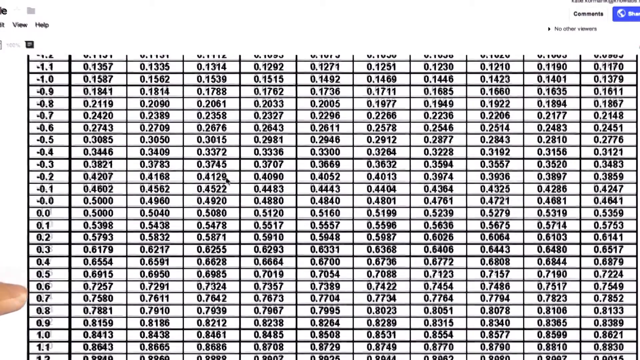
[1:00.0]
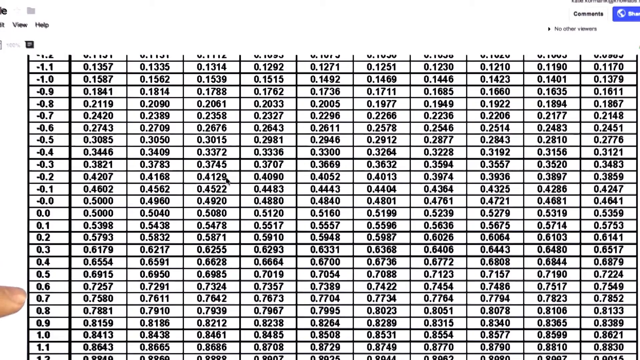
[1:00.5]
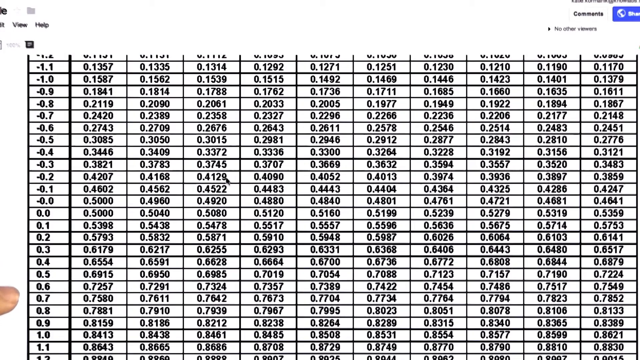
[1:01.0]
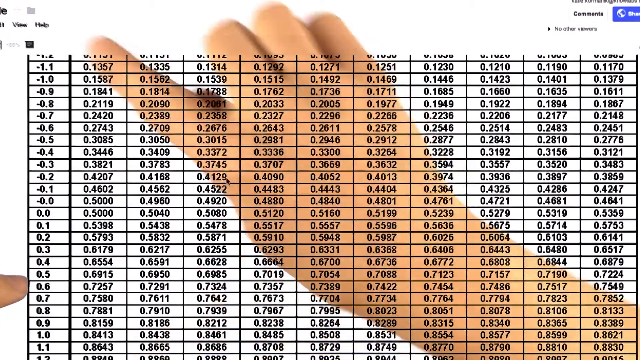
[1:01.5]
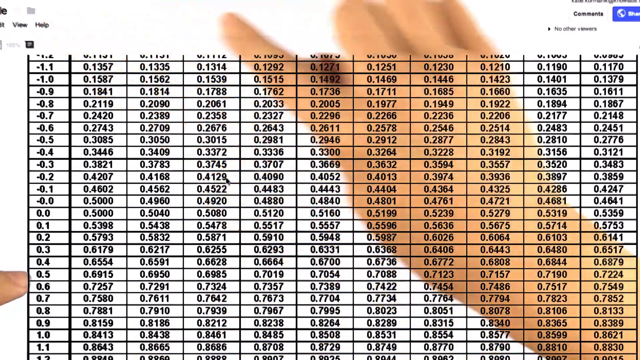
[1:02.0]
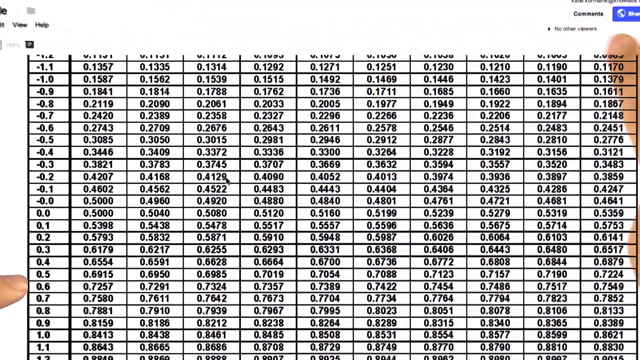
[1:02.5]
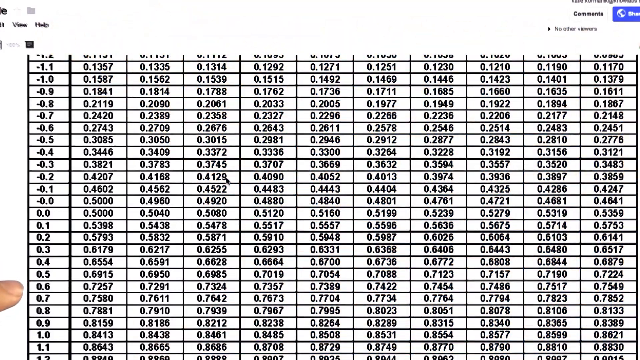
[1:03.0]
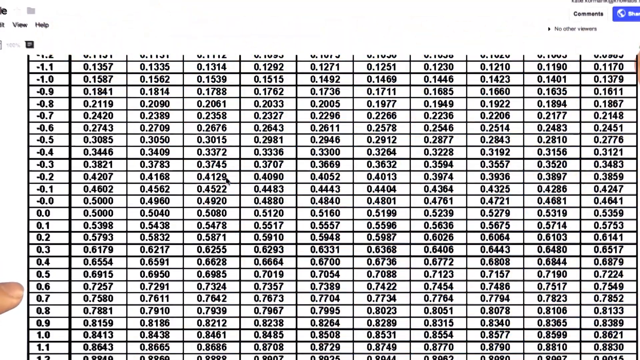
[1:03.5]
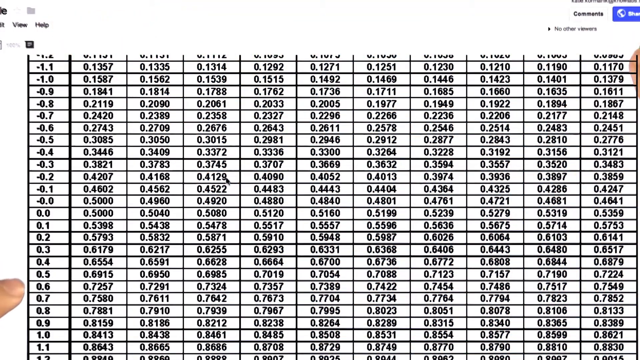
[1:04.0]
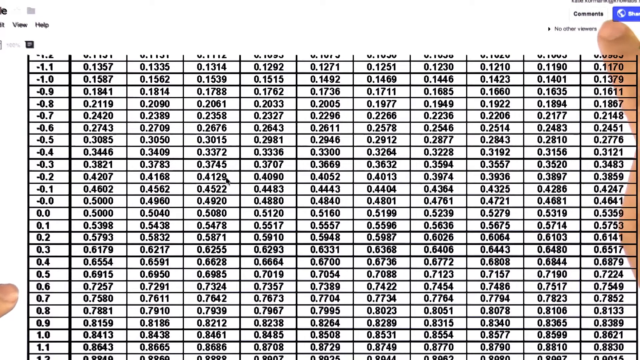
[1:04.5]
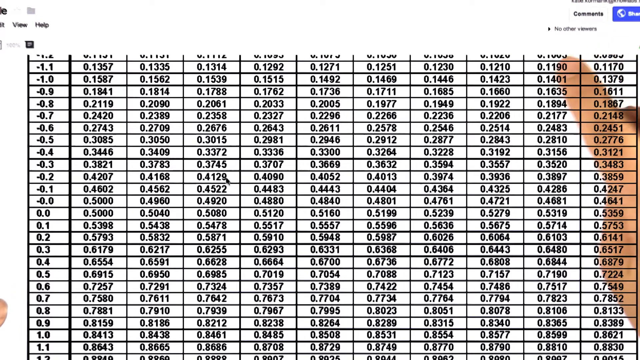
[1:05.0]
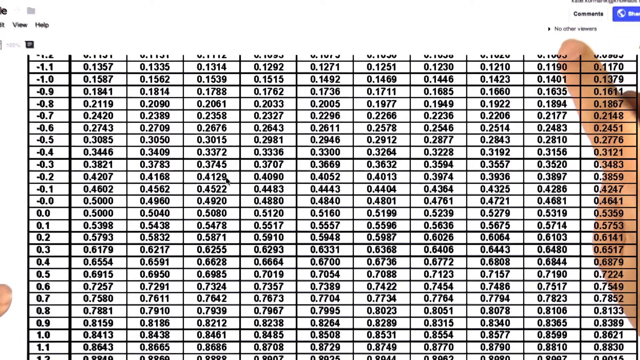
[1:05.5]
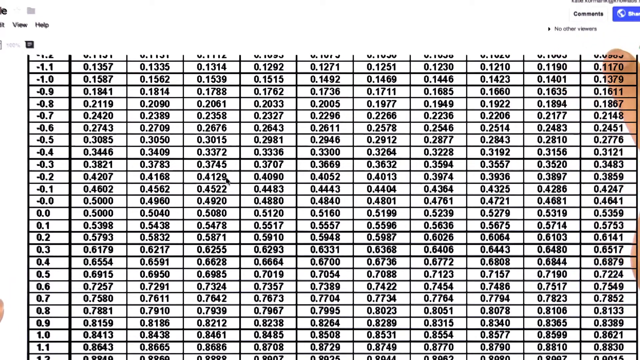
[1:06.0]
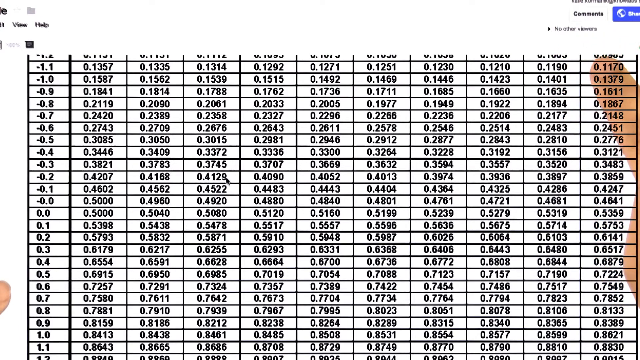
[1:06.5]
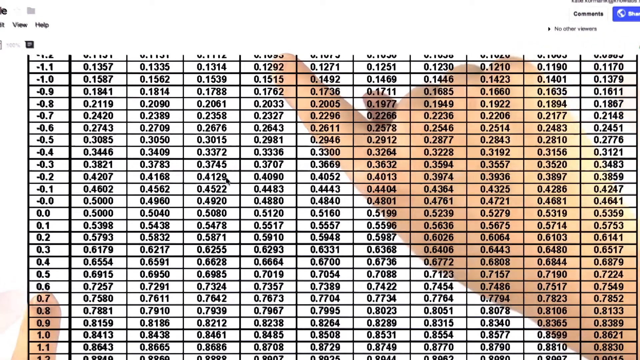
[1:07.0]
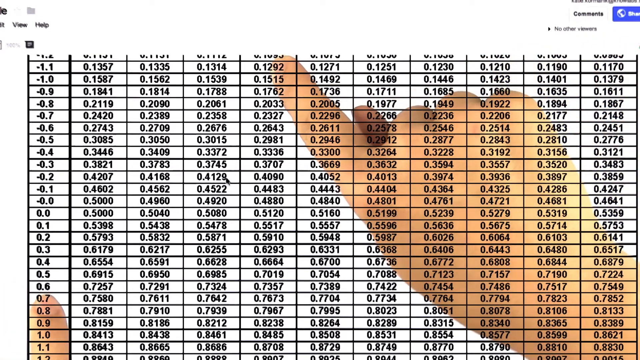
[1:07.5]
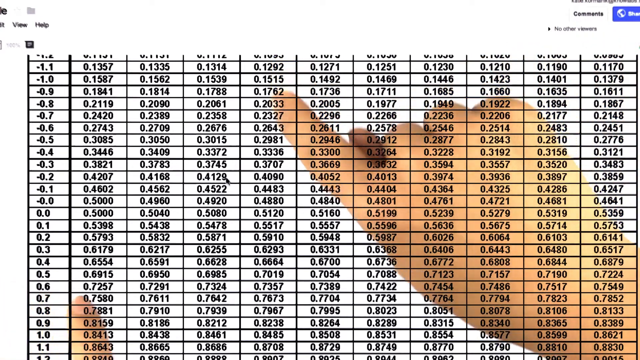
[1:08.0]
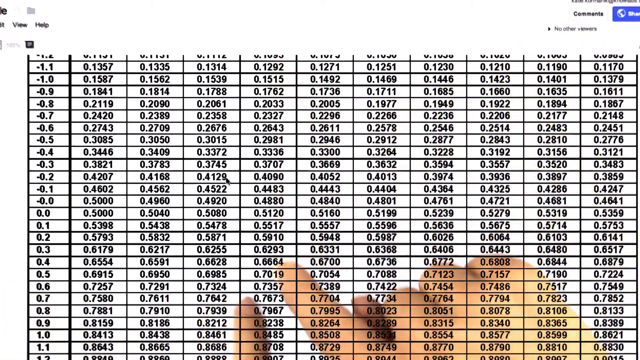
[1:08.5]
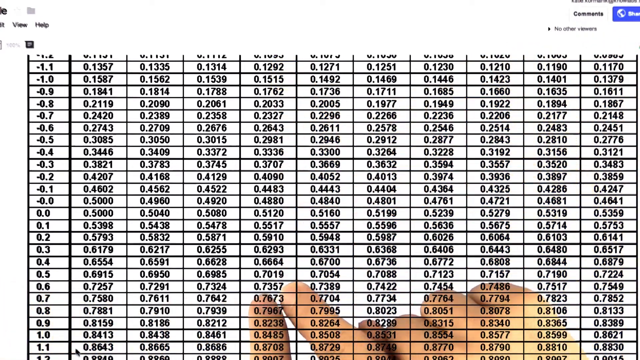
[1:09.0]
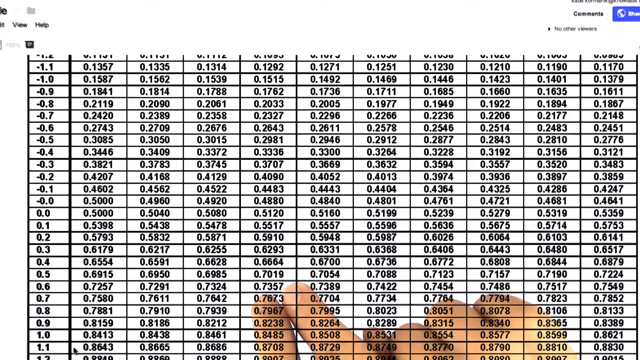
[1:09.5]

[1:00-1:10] A page full of chart information appears, starting at the top at negative 1.1, with 1.0 or 1.9 at the bottom. A fingertip is in the lower left-hand corner of the screen. The finger moves out a little at 0.6, and then the narrator moves his other hand across the top of the screen until it reaches the column reading 0.70 or 0.07357, finding it by going across from 0.6 and down from the top.